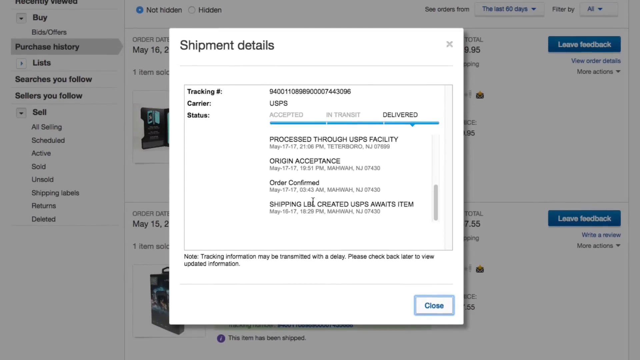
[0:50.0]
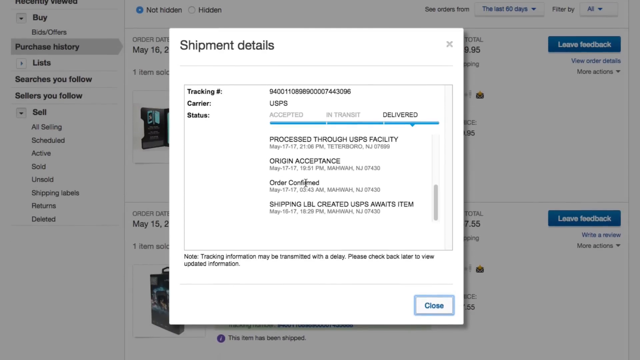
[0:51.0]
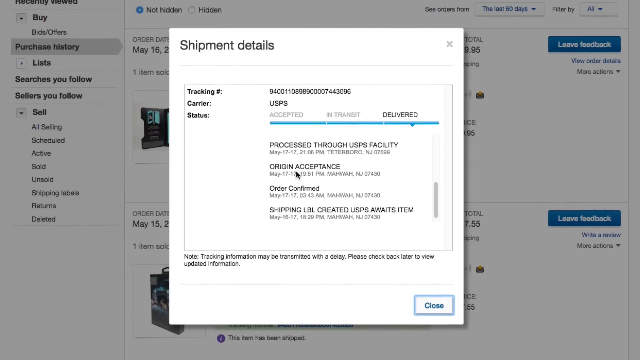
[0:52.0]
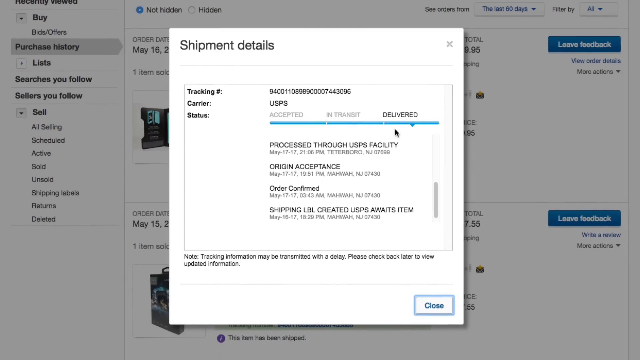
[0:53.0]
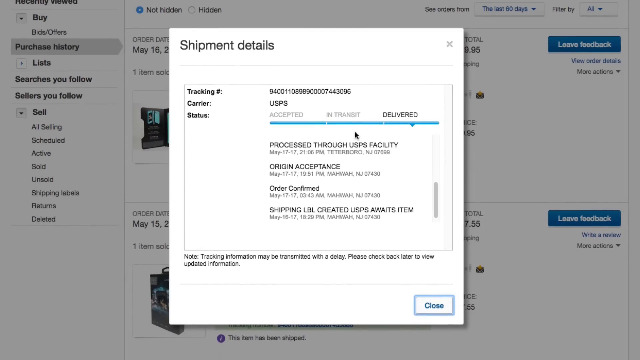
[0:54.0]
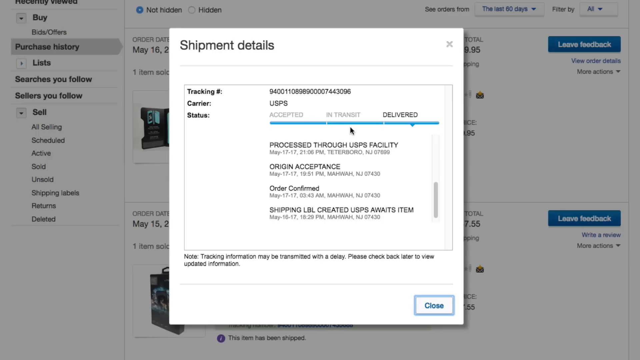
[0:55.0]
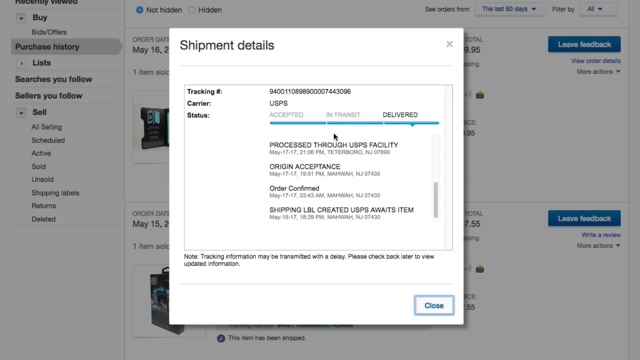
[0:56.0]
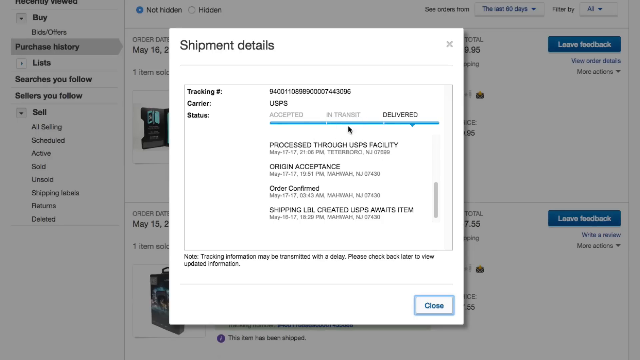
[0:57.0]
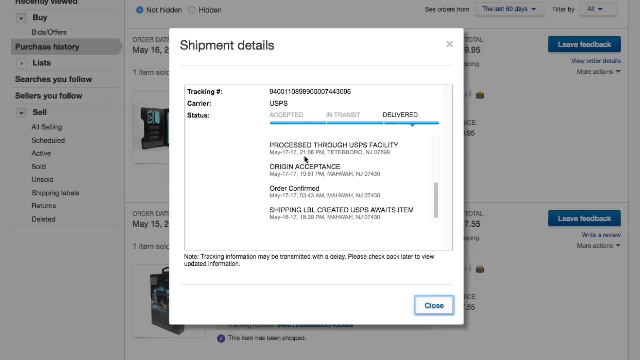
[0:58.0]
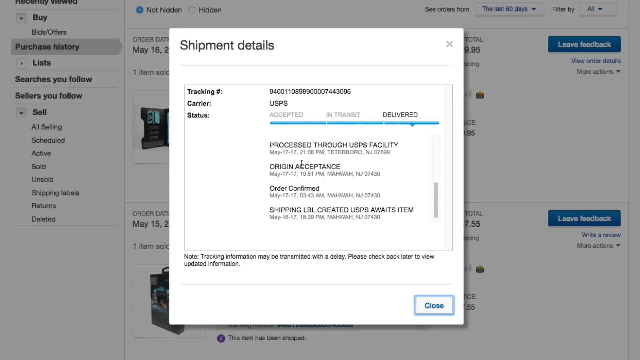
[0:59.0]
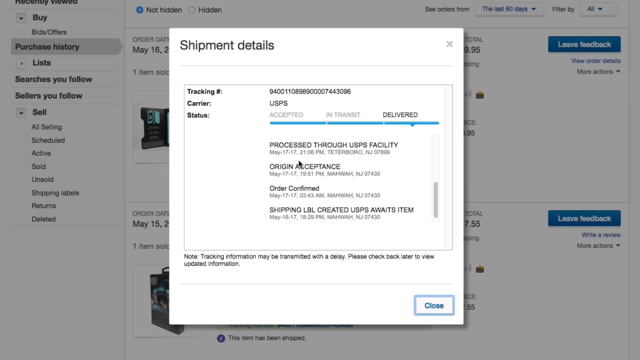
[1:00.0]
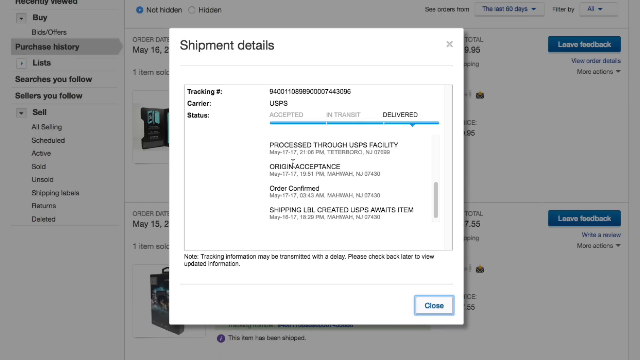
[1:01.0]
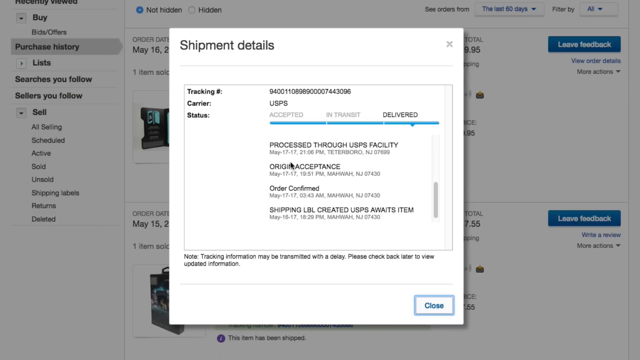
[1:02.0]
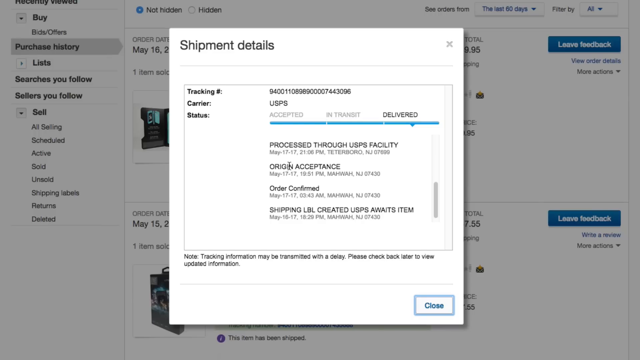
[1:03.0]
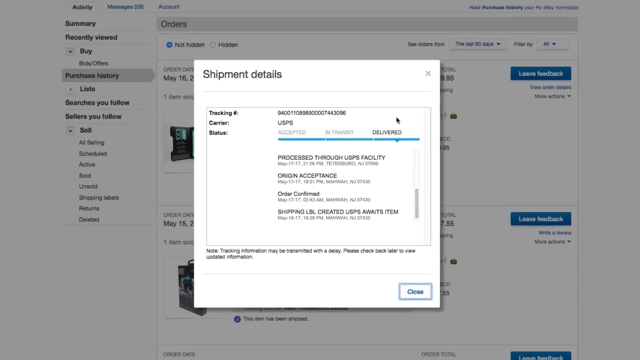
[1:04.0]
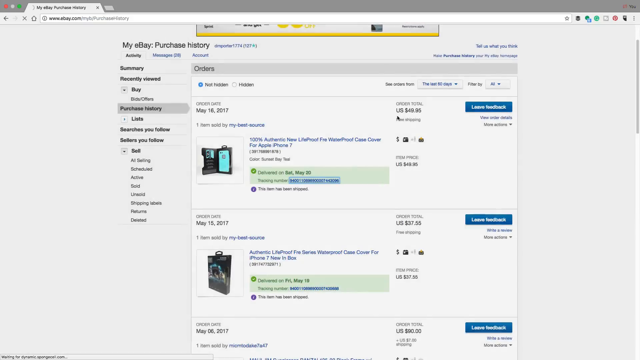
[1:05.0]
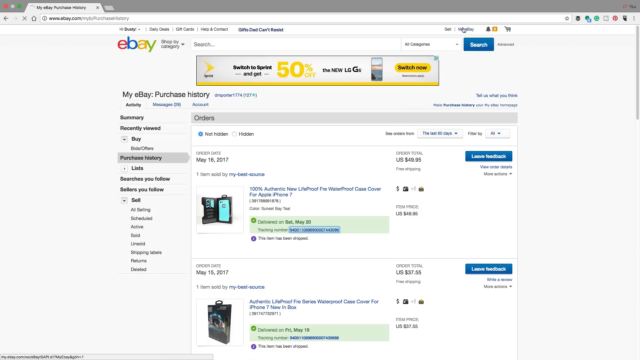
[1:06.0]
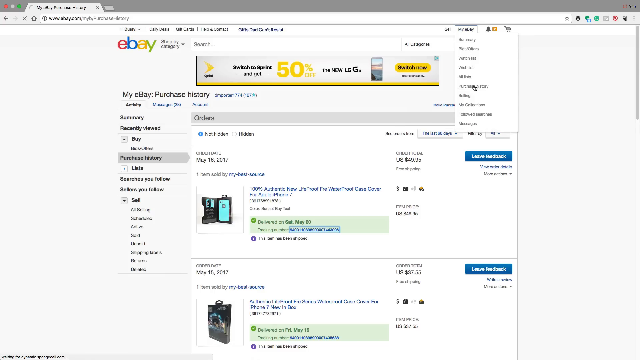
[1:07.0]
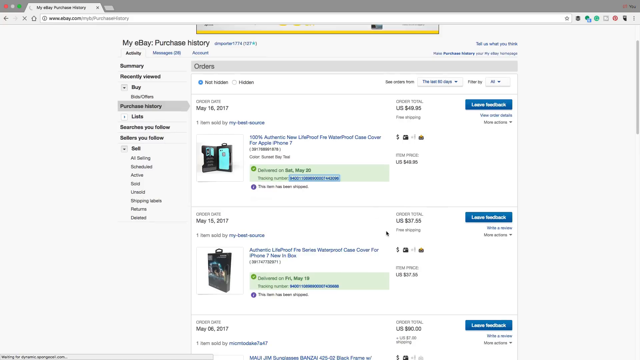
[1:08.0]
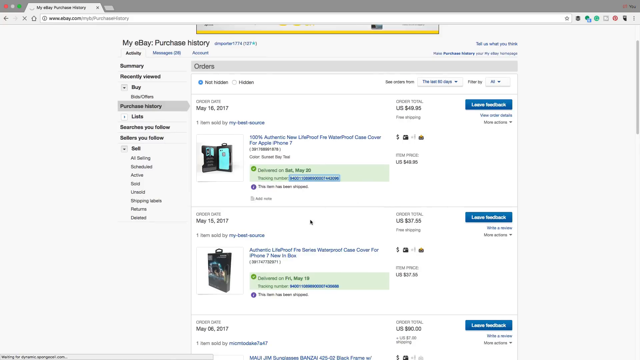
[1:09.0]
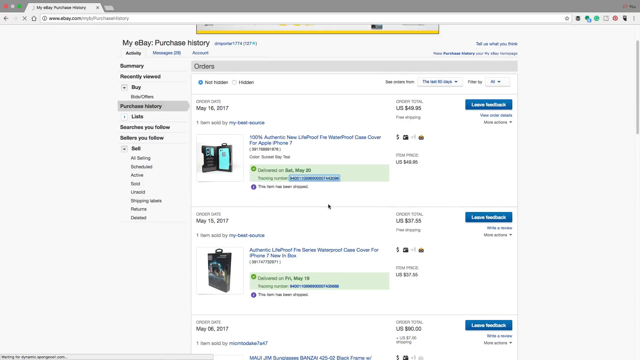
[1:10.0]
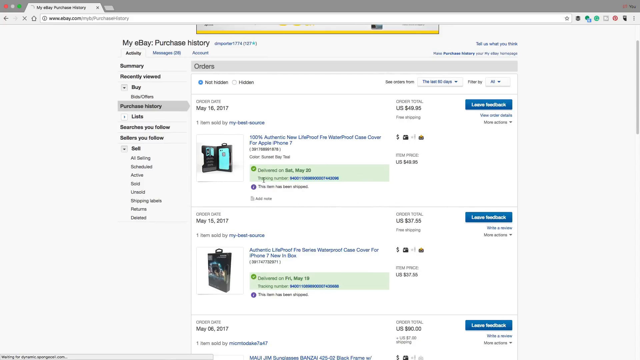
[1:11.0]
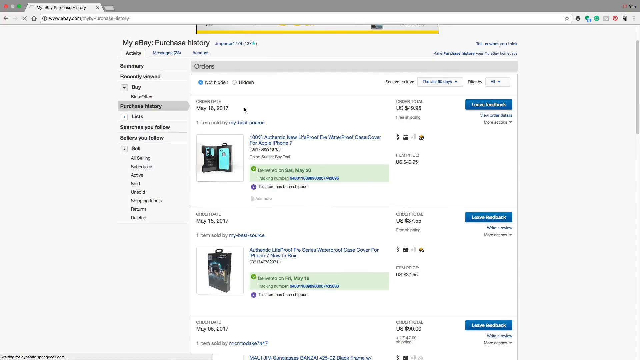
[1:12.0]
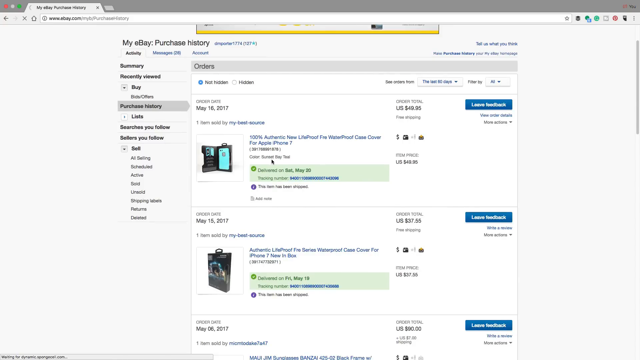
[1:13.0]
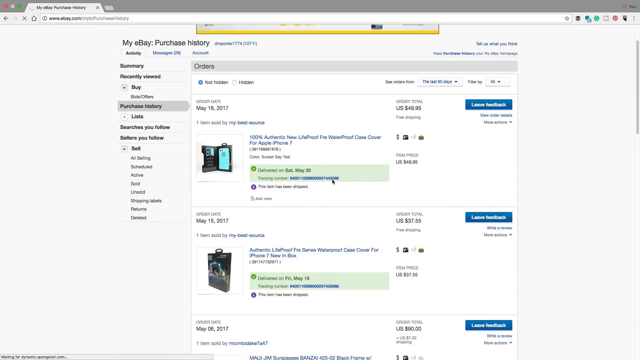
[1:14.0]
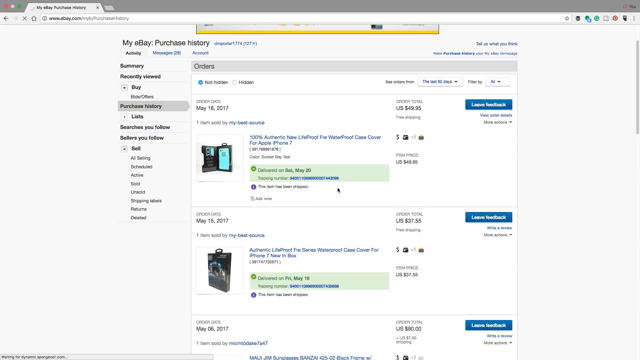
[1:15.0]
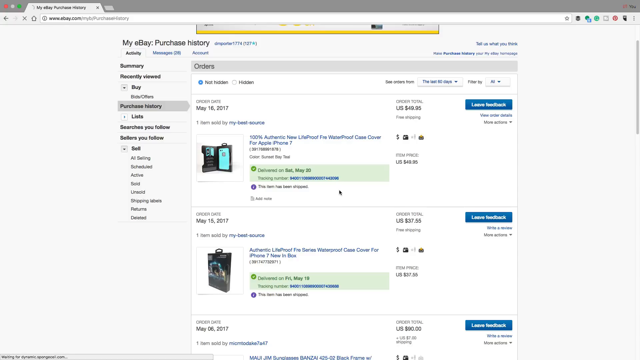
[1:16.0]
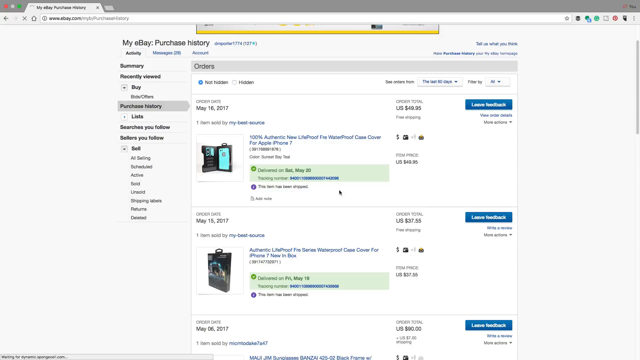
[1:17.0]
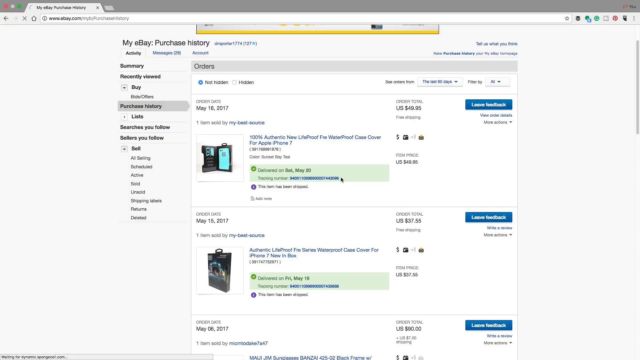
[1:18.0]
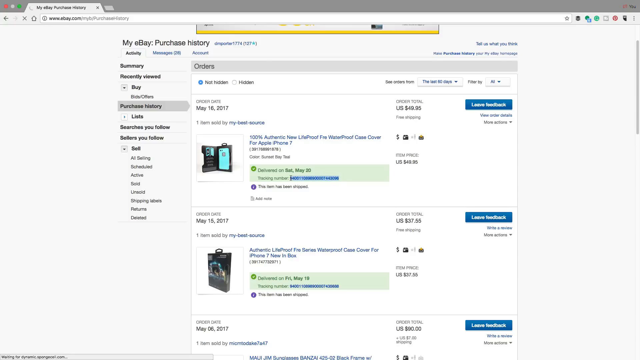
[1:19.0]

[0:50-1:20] The shipment details continue as the user scrolls up and down through the various places the package went. The mouse is used as a pointer, circling over the body where the delivery details are and over the titles at the top, including "in transit". The user then highlights the order acceptance portion of the details. The page zooms back out after the person exits, and they go back to the My eBay portion in the navigation to show where they came from. The purchase history with the two life proof waterproof cases is still visible as the mouse highlights and circles the shipment details of the first product. The site is identifiable as eBay from the graphics, the logo at the top, and the navigation bar containing eBay.com.